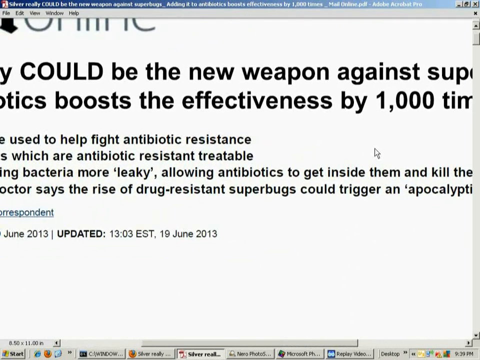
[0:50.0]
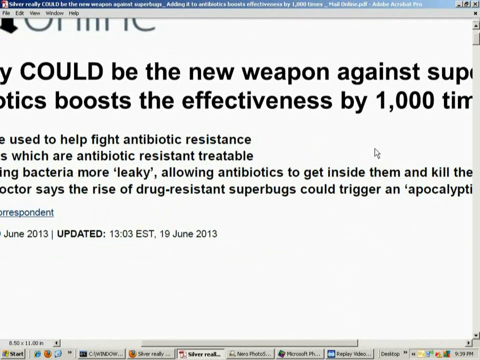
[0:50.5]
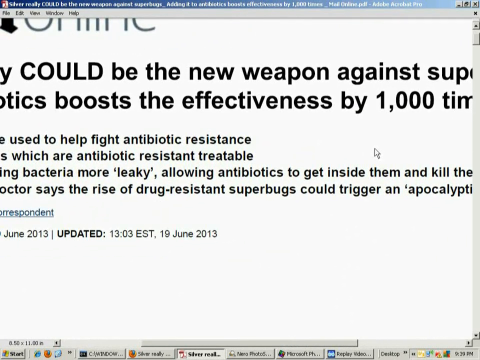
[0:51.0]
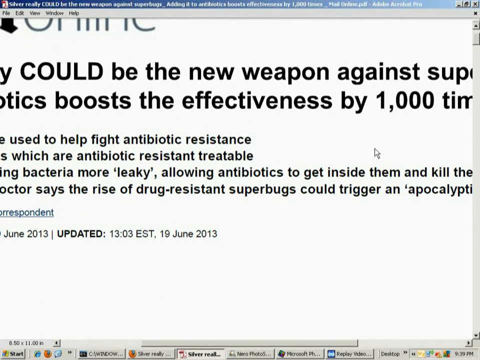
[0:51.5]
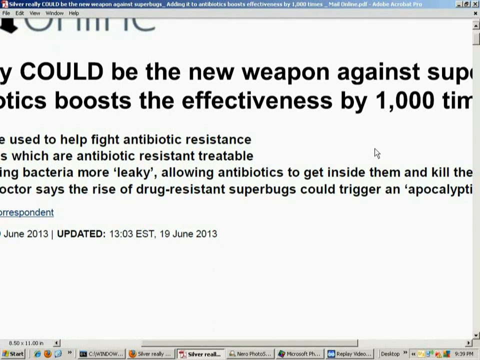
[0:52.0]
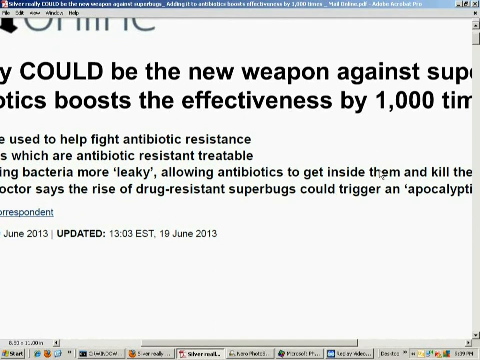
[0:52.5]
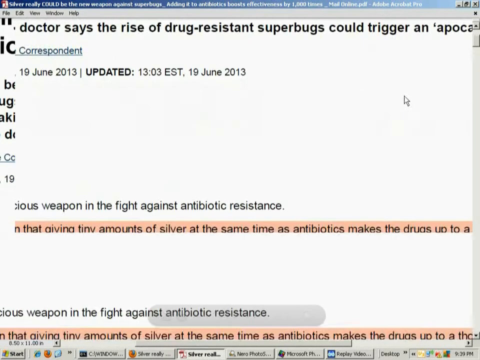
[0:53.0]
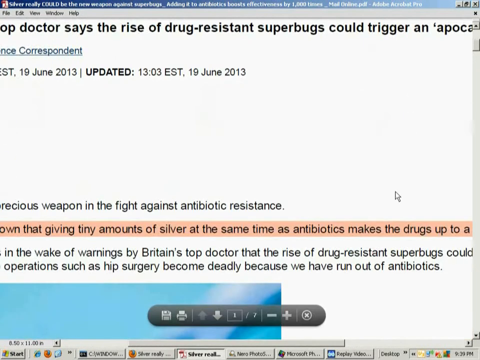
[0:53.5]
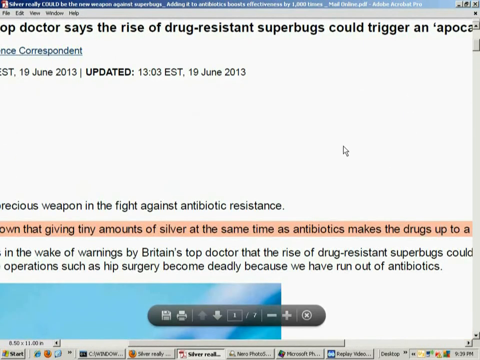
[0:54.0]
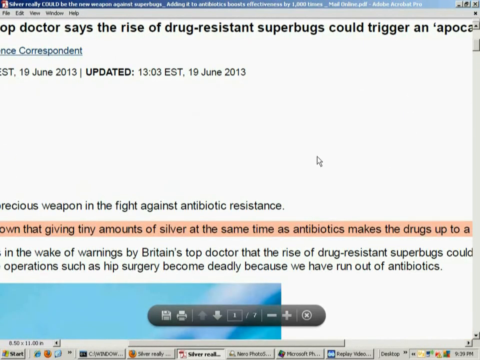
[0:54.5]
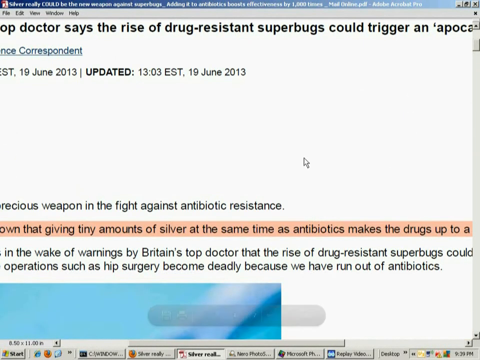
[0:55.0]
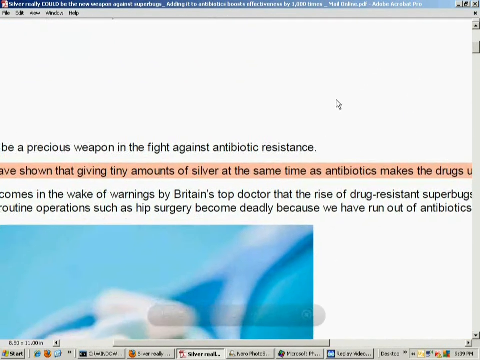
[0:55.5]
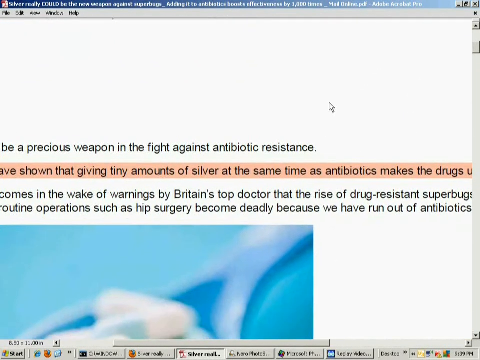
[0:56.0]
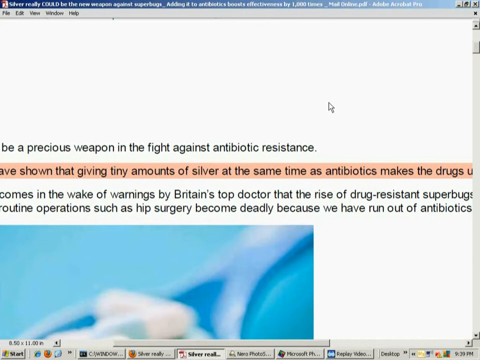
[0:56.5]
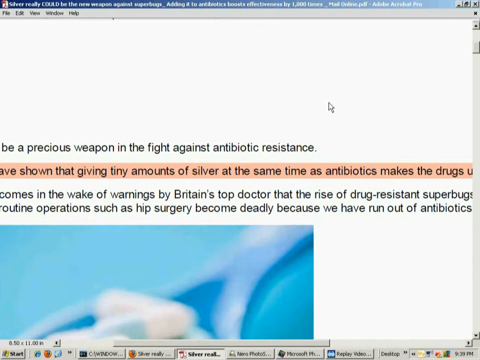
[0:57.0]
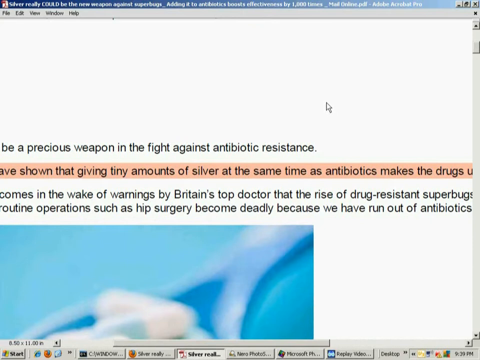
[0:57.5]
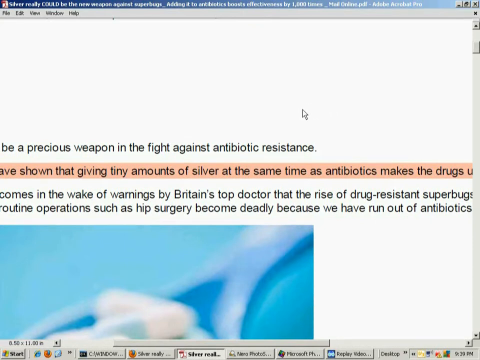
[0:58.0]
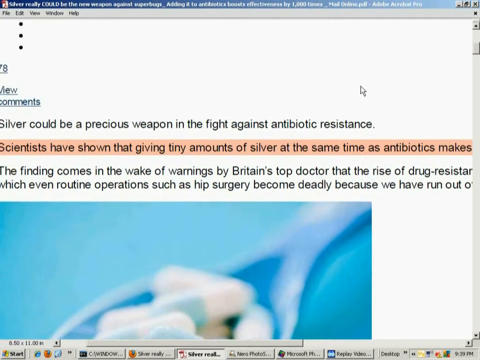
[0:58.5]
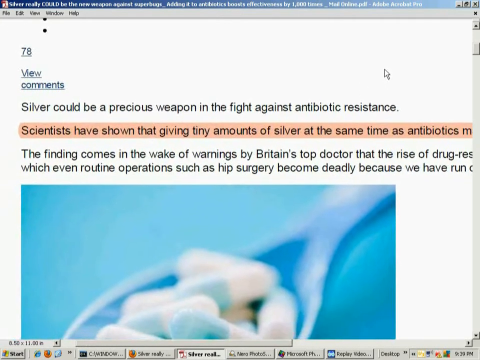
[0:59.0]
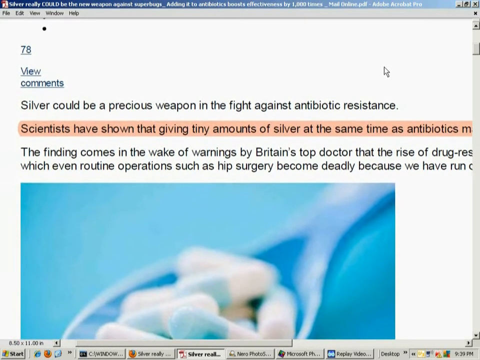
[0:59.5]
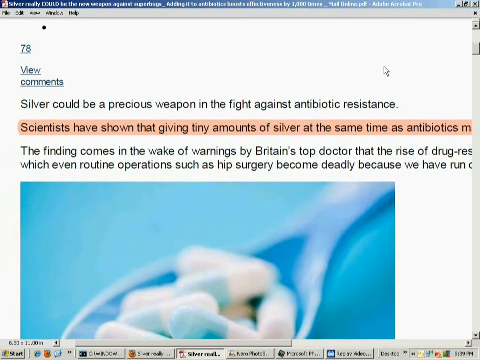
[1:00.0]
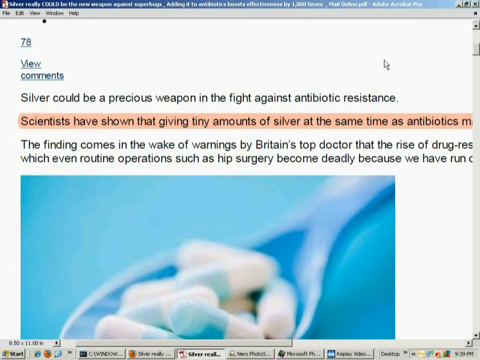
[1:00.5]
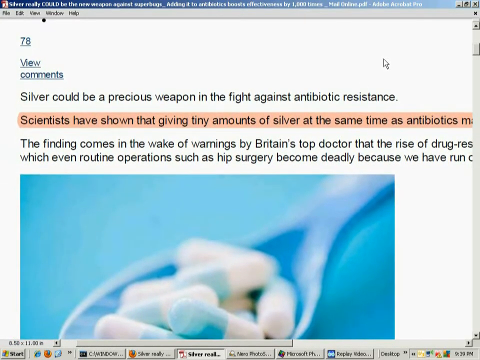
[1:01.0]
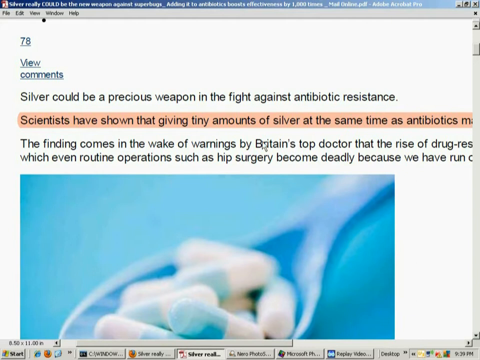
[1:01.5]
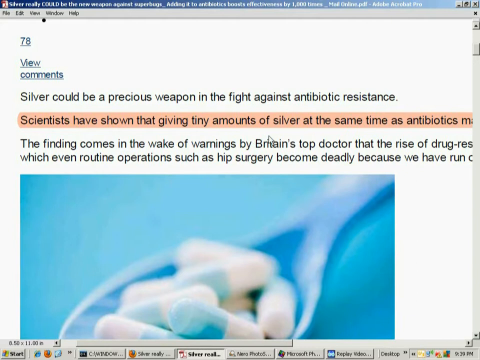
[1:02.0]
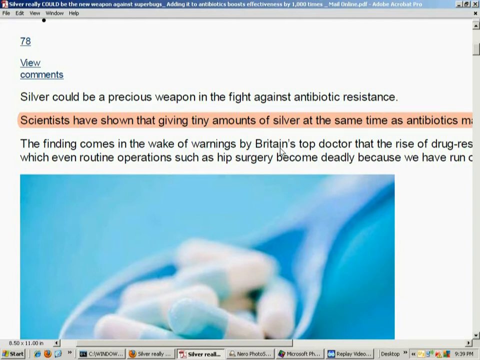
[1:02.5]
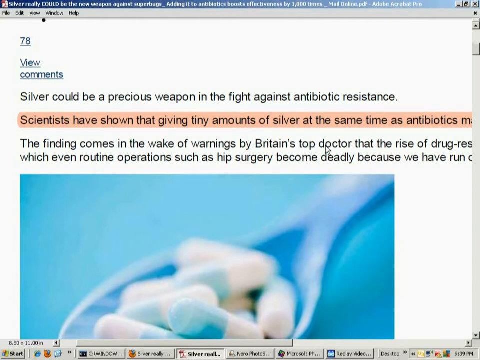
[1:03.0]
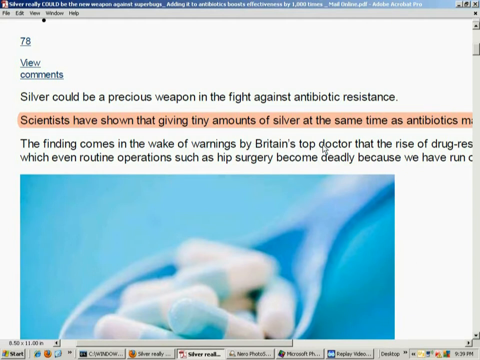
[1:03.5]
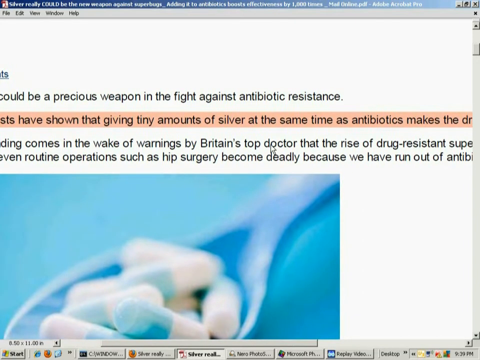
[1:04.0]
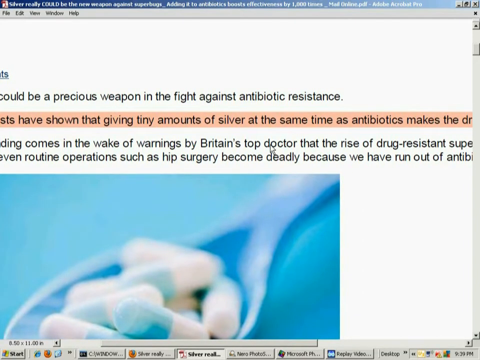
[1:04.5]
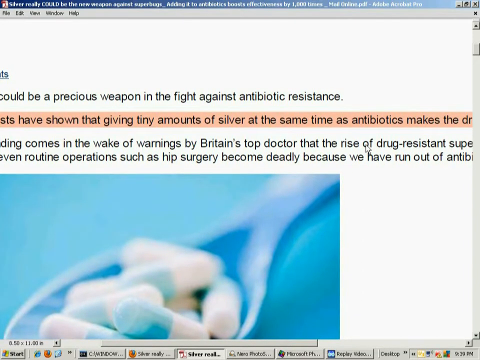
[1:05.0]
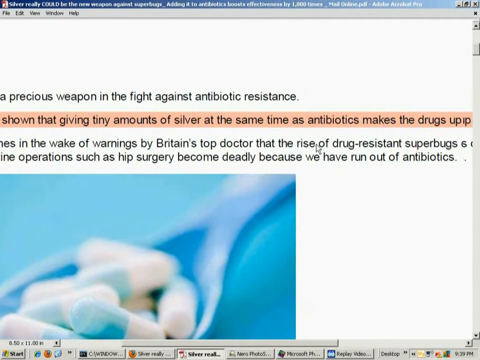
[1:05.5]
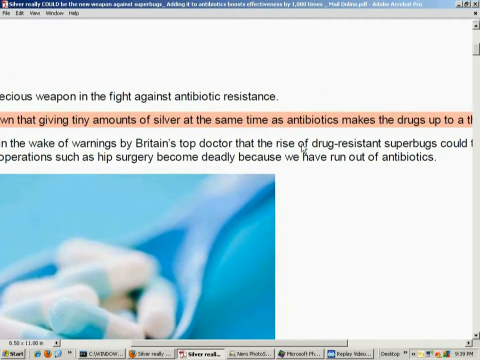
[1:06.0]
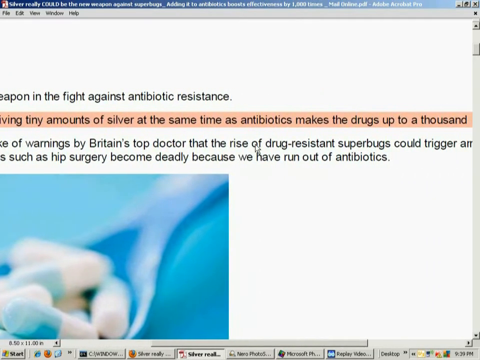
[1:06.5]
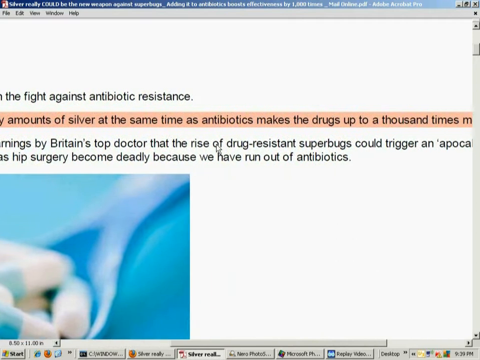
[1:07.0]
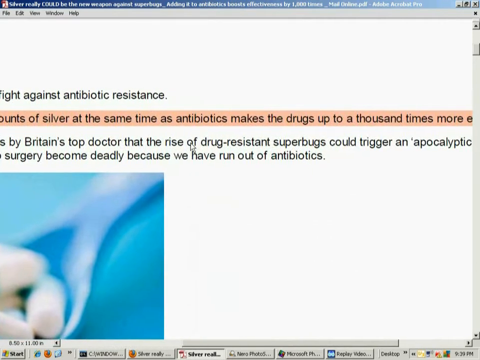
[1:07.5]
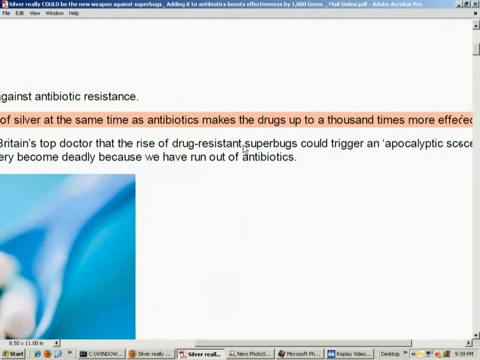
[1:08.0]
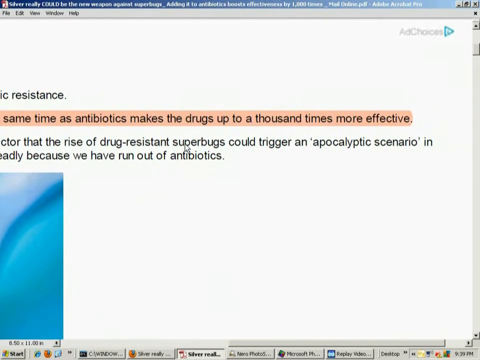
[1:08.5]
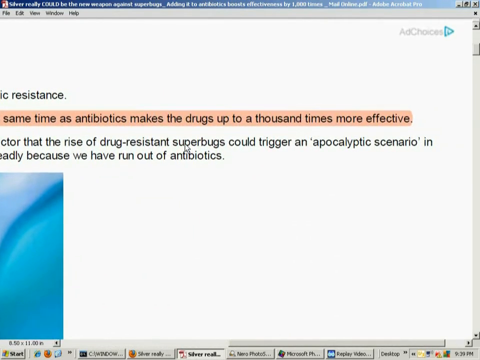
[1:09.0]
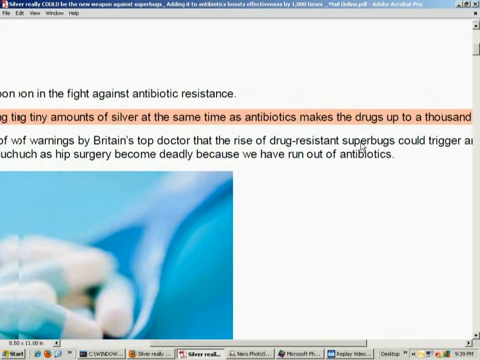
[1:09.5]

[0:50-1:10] The article continues on screen. At the bottom it reads "view comments", followed by "silver could be a precious weapon in fight against antibiotic resistance". The text then reads "scientists have shown that giving tiny amounts of silver at the same time as antibiotics makes the drugs up to a thousand times more effective. the finding comes in the wake of warnings by Britain's top doctor that the rise of drug resistance superbugs could trigger an apocalyptic scenario in which even routine operations such as hip surgery become deadly because we have run out of antibiotics." A picture at the bottom possibly illustrates the issue. The sentence beginning "scientists have shown that giving tiny amounts of silver at the same time as antibiotics makes the drug effective" is highlighted in light pink.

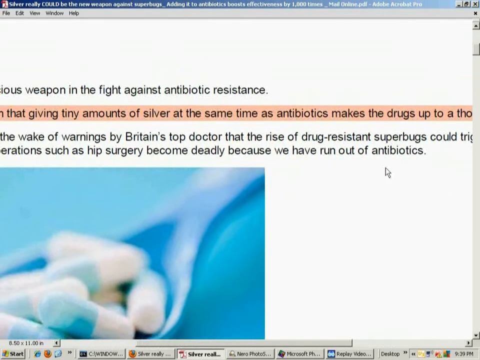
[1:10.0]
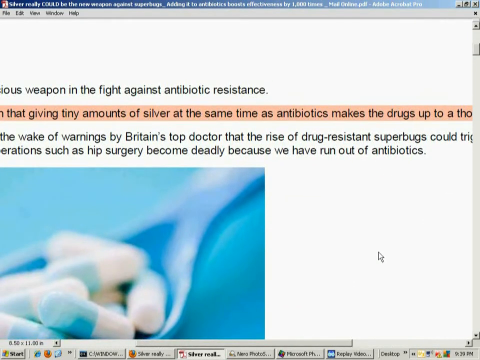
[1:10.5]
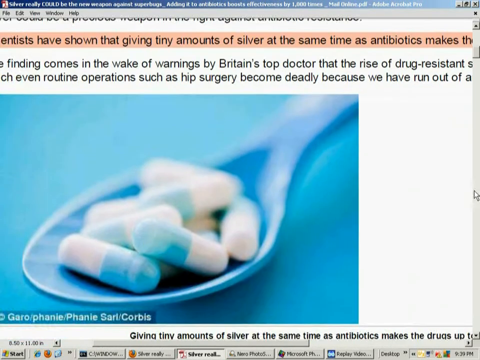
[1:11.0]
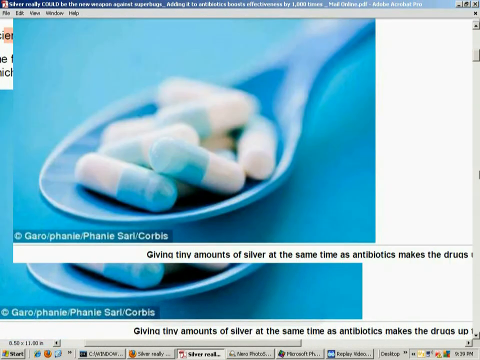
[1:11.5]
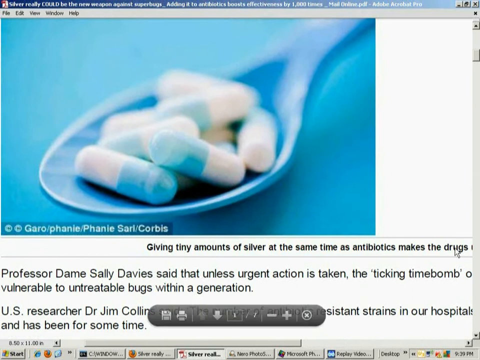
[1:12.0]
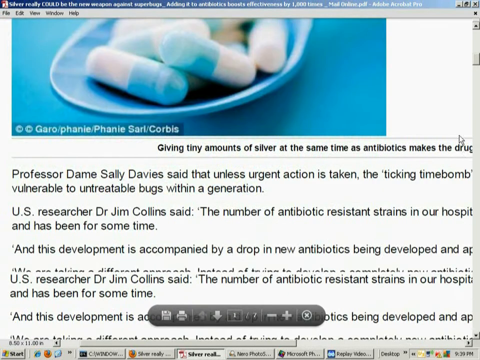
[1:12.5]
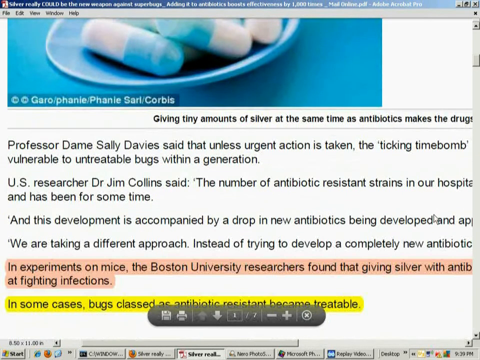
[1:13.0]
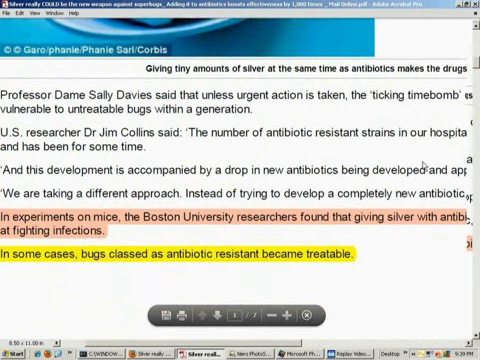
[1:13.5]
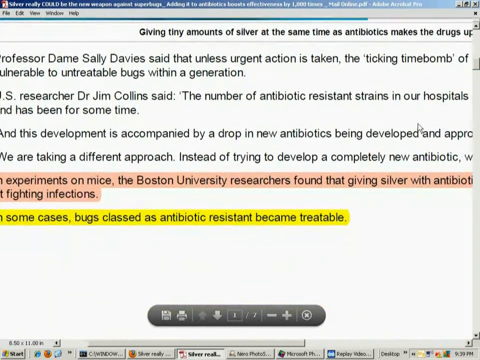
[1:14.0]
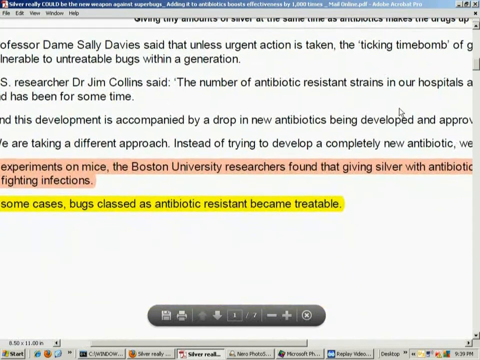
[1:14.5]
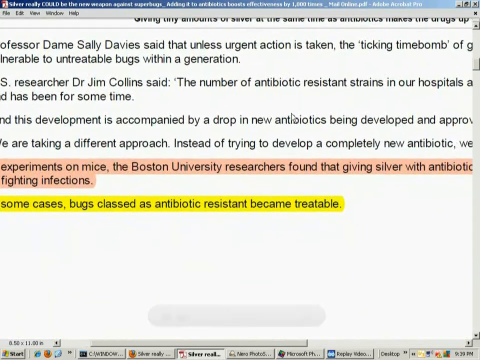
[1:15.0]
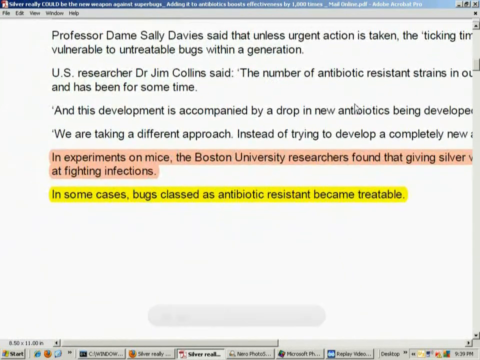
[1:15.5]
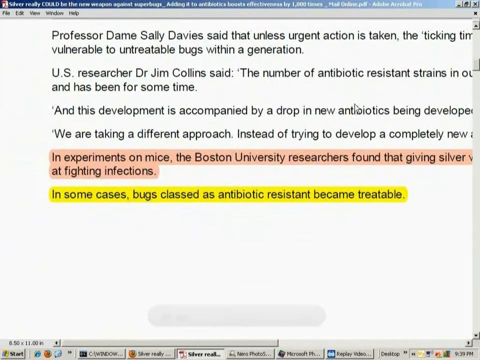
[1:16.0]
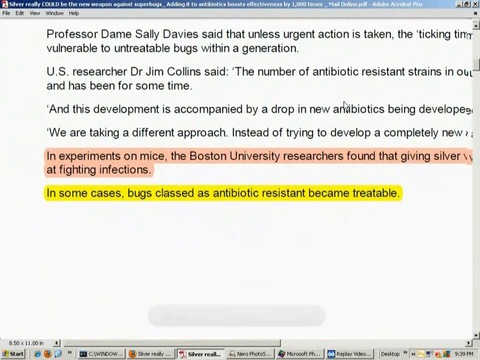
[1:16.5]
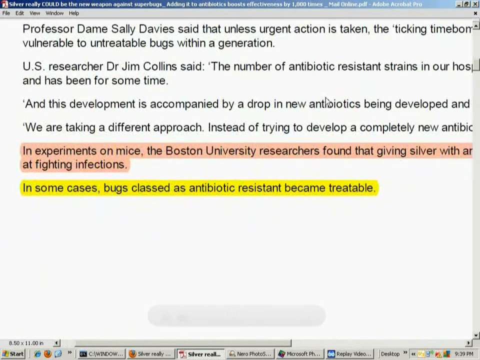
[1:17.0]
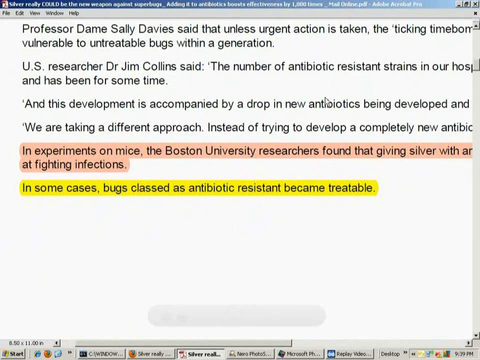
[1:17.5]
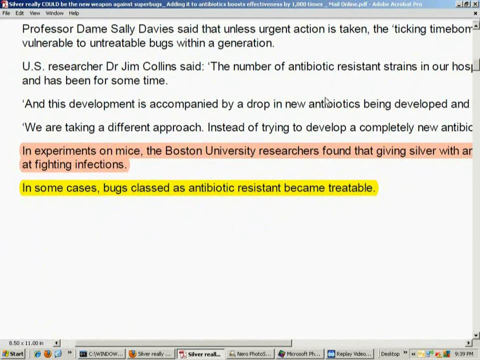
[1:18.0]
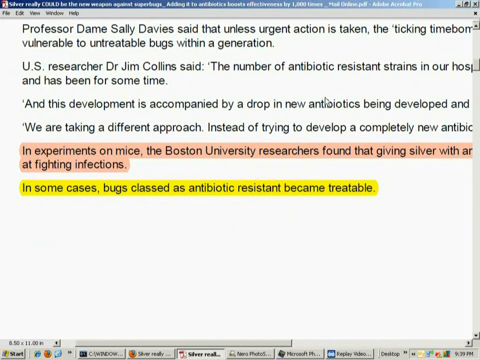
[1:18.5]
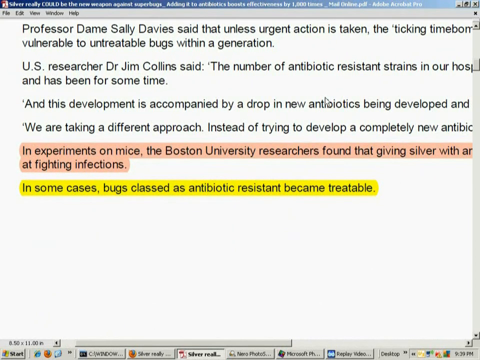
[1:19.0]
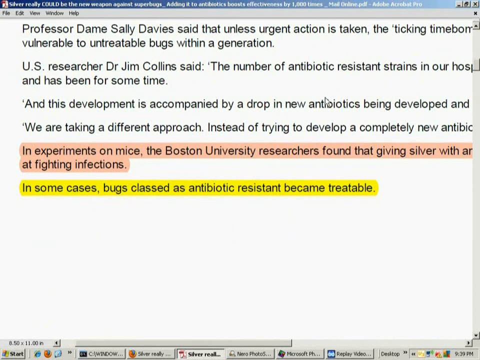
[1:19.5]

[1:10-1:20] A picture shows blue and white pills in a spoon, roughly seven or more of them, with a caption reading "giving tiny amounts of silver at the same time as antibiotics makes the drugs more effective". Below, the article text reads "Professor Dame Sally Davis said that unless urgent action is taken, the ticking time bomb", but the line is cut off. Further down it reads "vulnerable to treatable bugs within a generation" and "U.S researcher Dr Jim Collins said the number of antibiotic resistance strains in our hospitals", with the rest not visible because the page is fully zoomed in. Further text reads "and has been for some time", "this development is accompanied by a drop in new antibiotics being developed and approved" and "we are taking a different approach instead of trying to develop a completely new antibiotic".